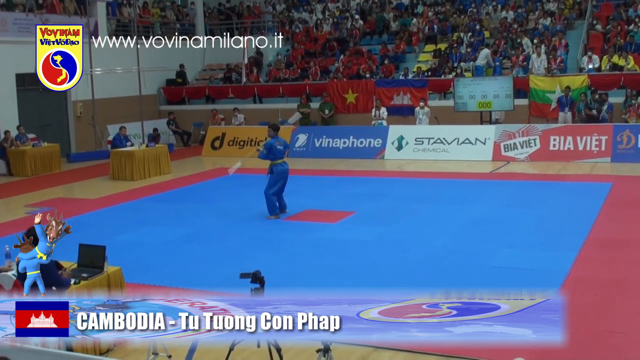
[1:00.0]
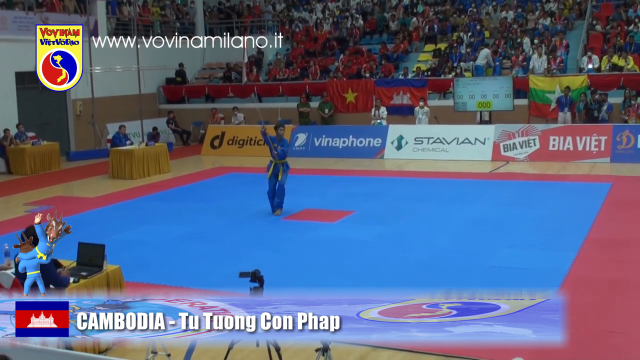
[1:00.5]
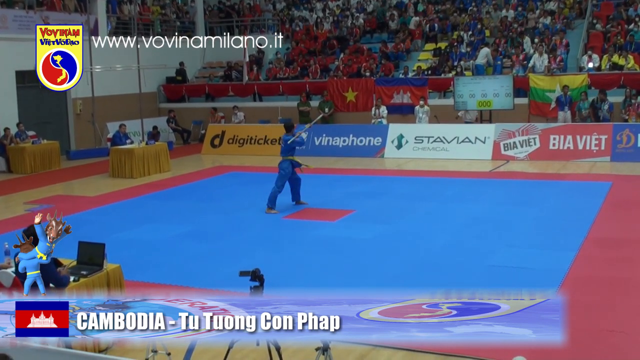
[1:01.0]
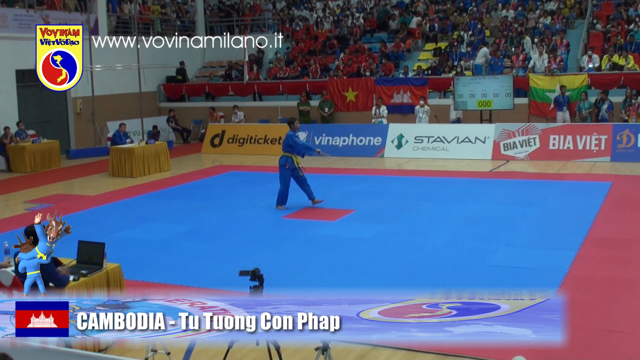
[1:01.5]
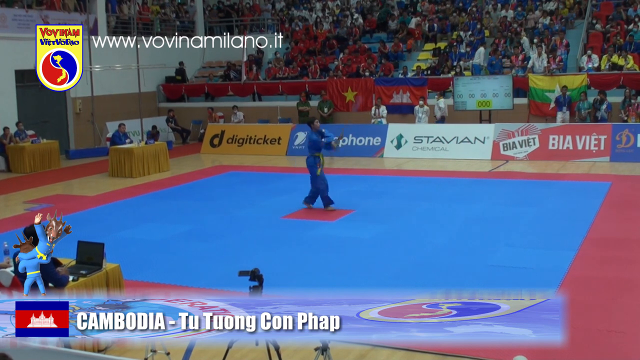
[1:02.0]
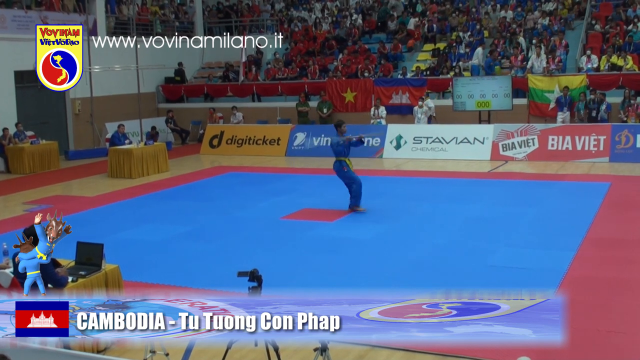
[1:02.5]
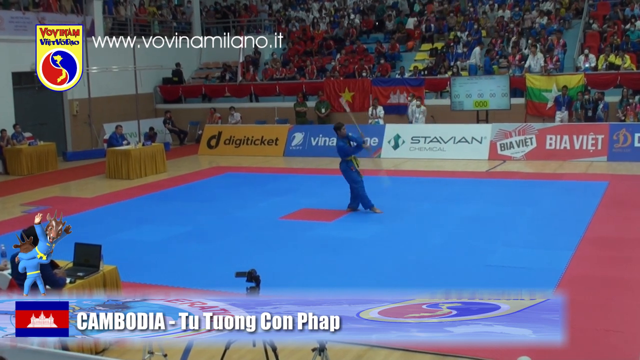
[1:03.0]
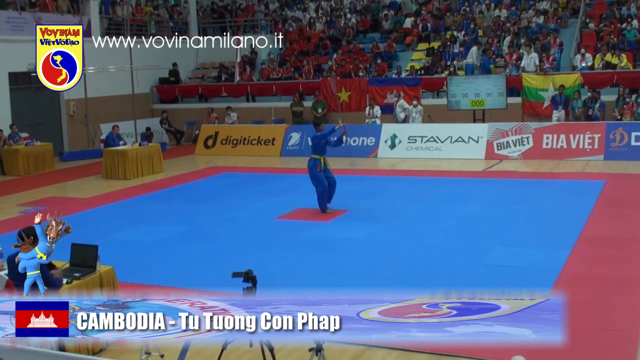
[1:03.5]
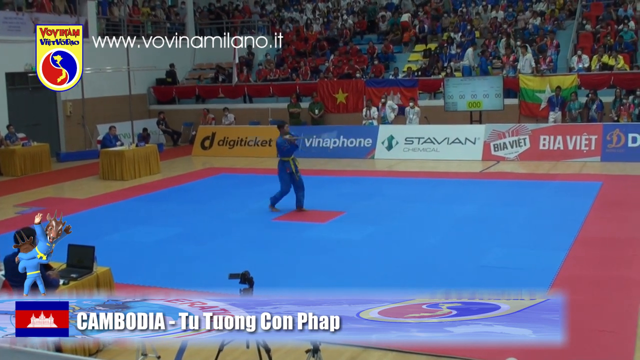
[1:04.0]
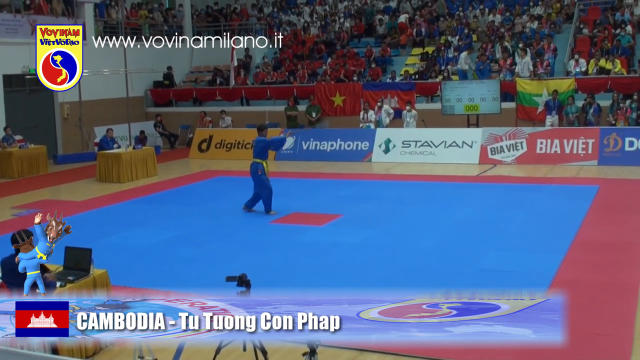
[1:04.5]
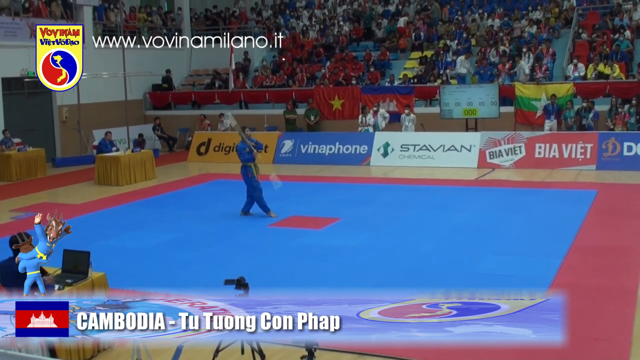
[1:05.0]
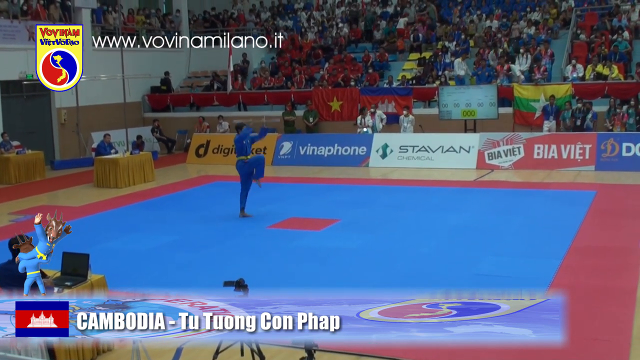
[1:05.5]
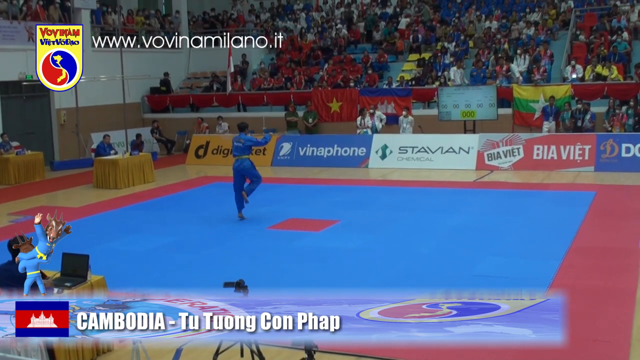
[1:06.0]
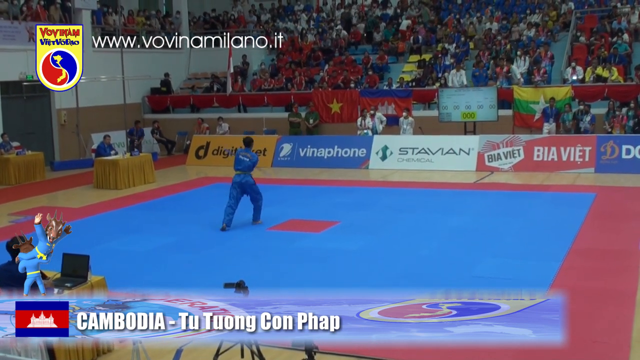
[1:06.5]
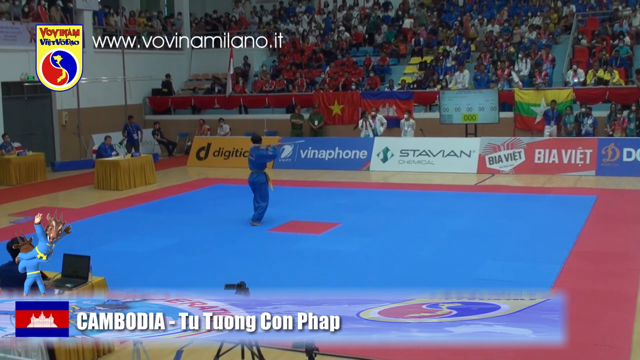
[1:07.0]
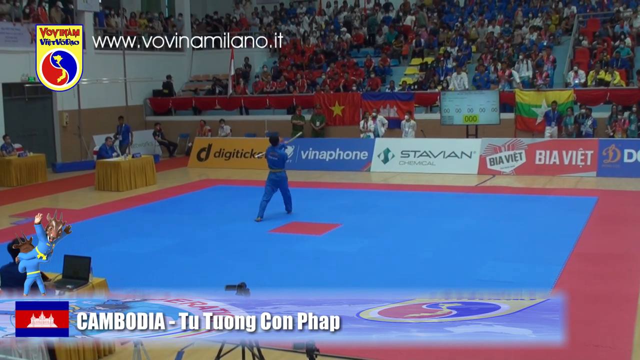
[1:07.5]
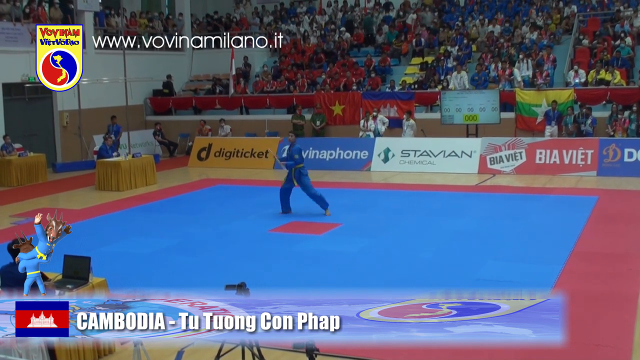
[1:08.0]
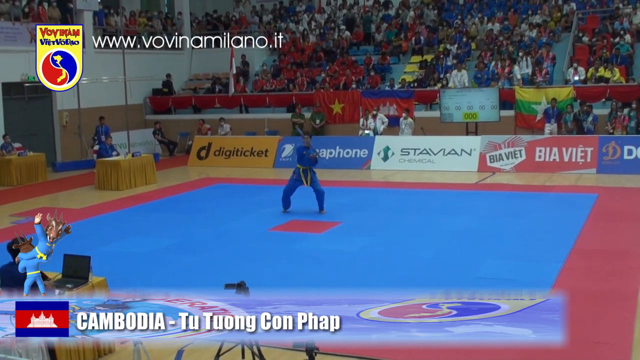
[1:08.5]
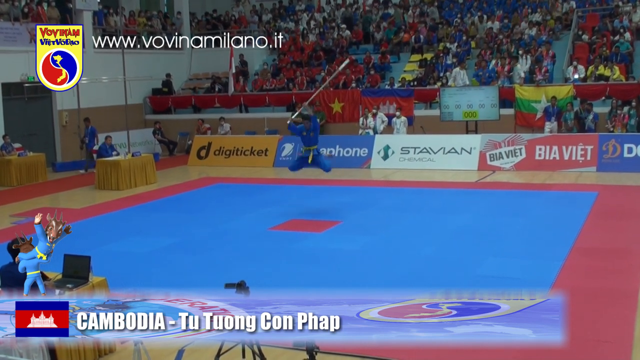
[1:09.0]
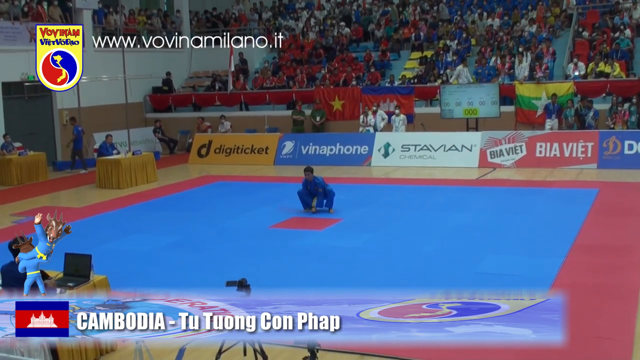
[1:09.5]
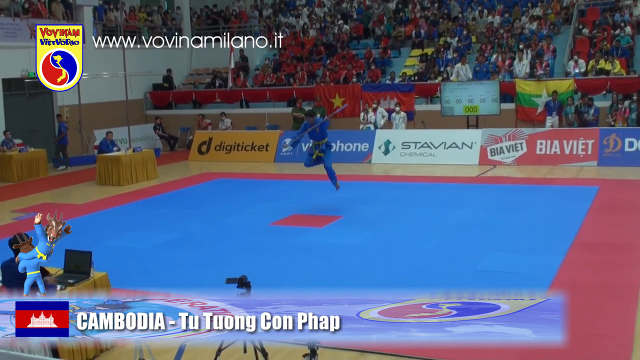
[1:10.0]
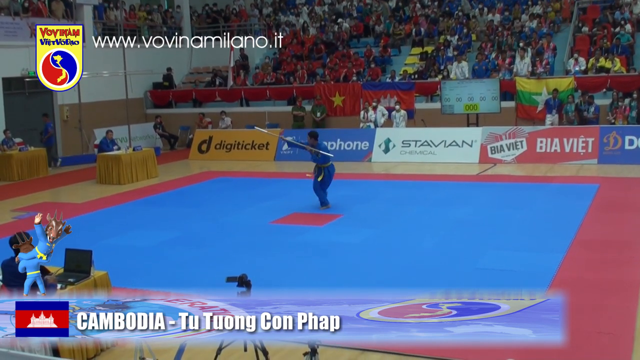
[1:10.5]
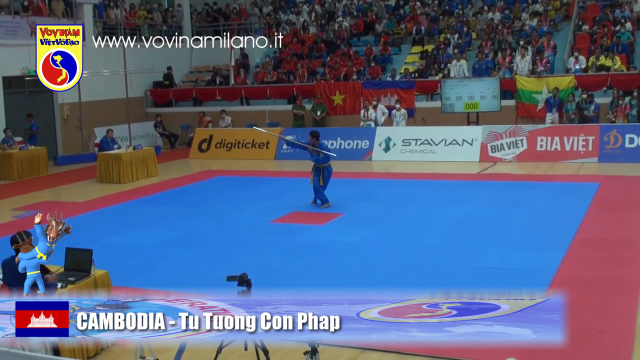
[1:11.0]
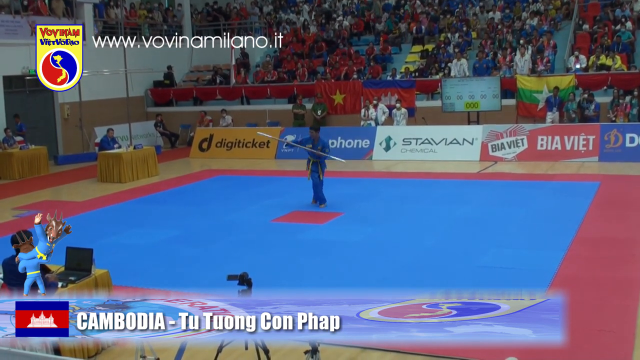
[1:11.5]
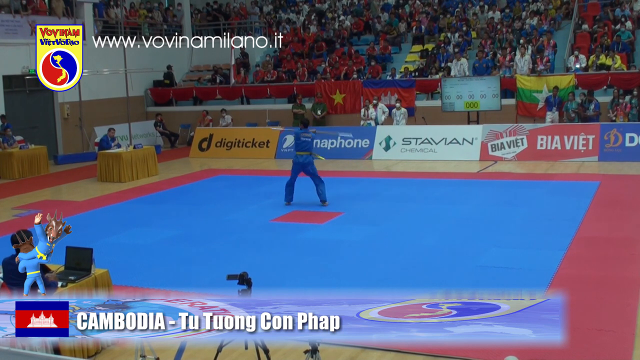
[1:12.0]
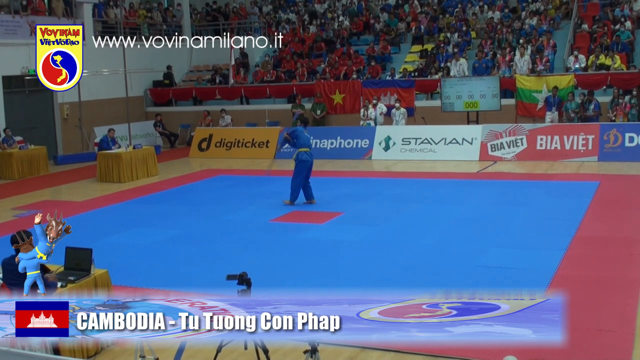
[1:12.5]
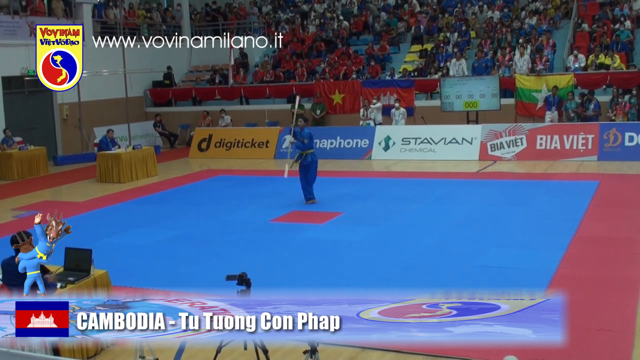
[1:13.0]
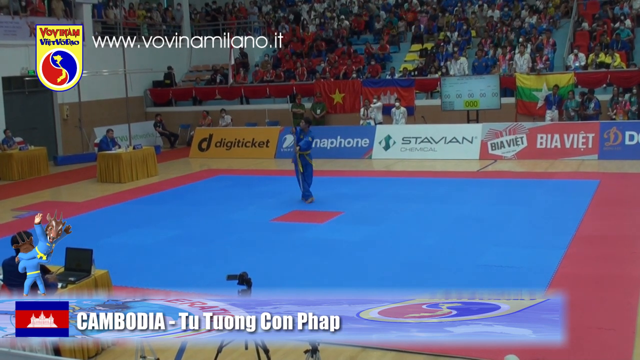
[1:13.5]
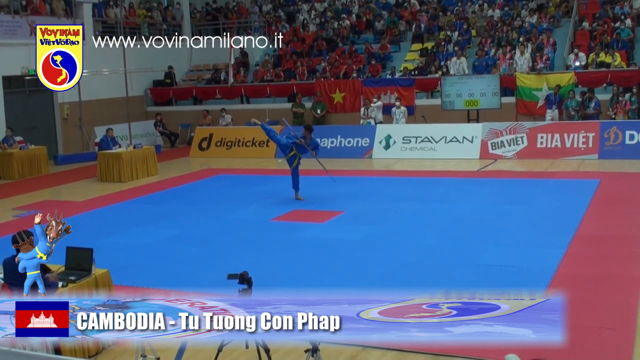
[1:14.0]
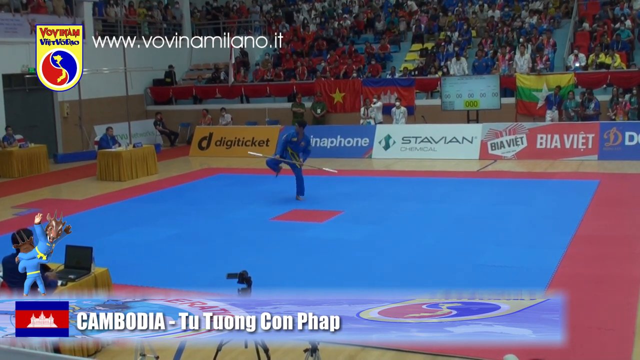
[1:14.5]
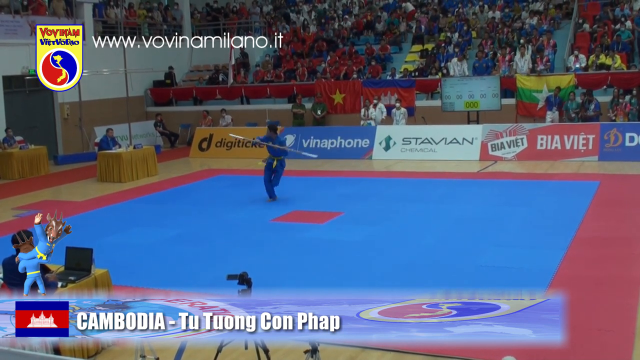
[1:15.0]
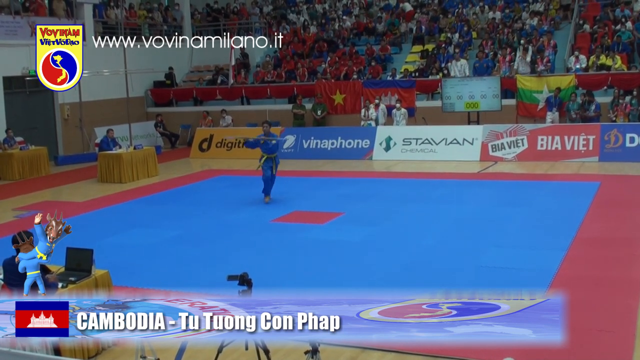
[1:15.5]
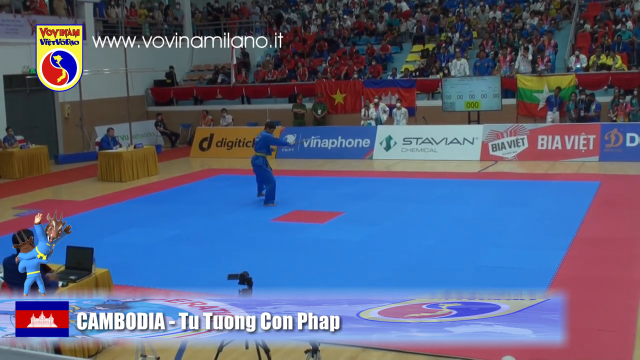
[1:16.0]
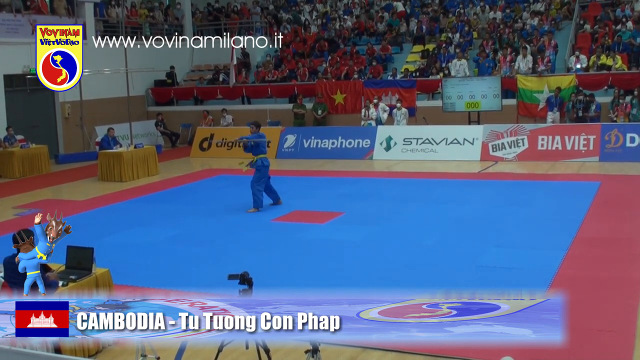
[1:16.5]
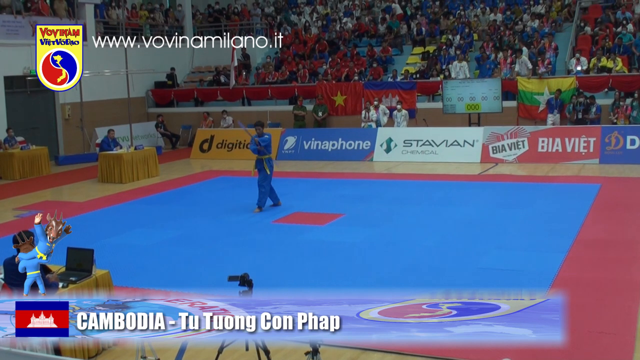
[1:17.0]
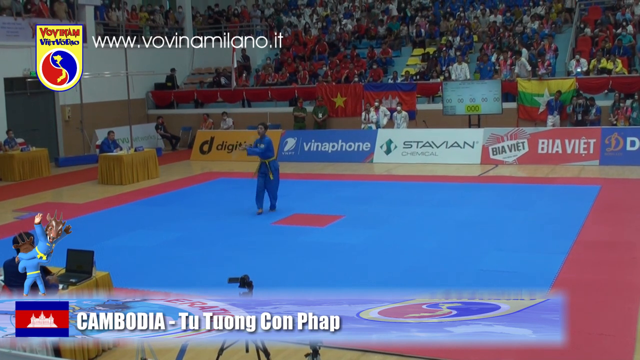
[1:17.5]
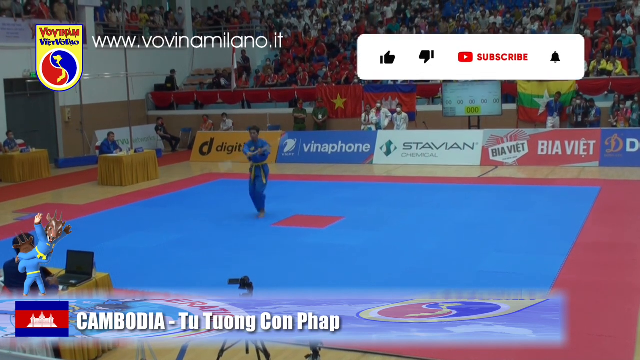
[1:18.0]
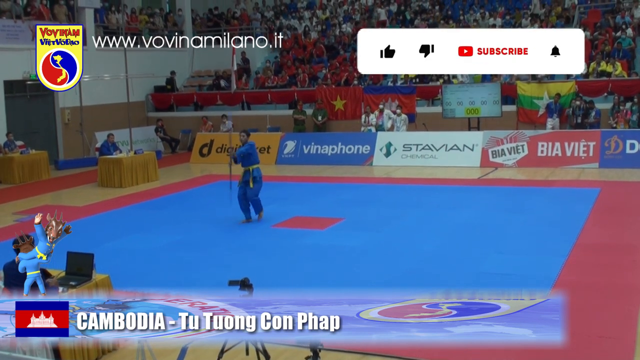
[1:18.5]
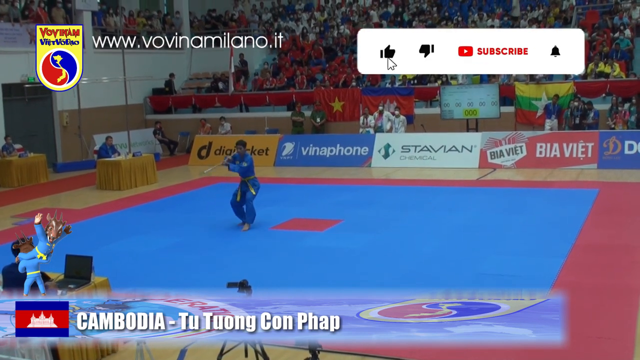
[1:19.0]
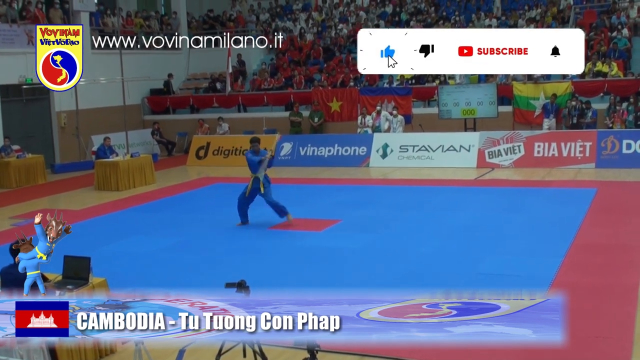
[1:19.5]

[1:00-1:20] The sports arena has an audience in the background on tiered levels of seats, and colorful company banners with ads near the floor at the edge of the arena. Some people in the background are holding flags, and some people are standing around the edge of the arena. On the left, two people are at a table with a brown skirt, and two more are at the same type of table further back against a white wall, near a doorway. The arena has a blue floor with an orange square in the center, surrounded on the outside by an orange band. A man with black hair stands in the center of the arena, wearing a blue shirt, blue pants, and a yellow rope belt, and holding a long sword or spear. He twirls the sword or spear with fancy footwork and handwork, dancing around for the audience, moving from side to side and facing different directions as he performs.